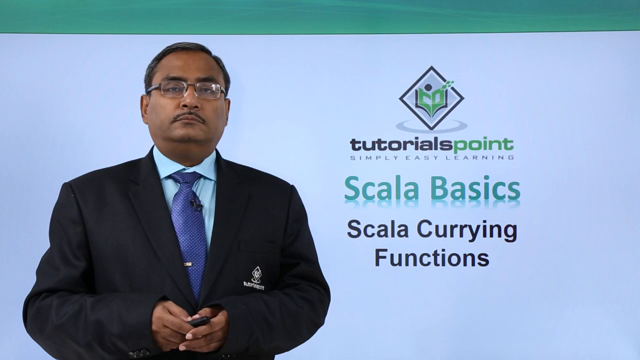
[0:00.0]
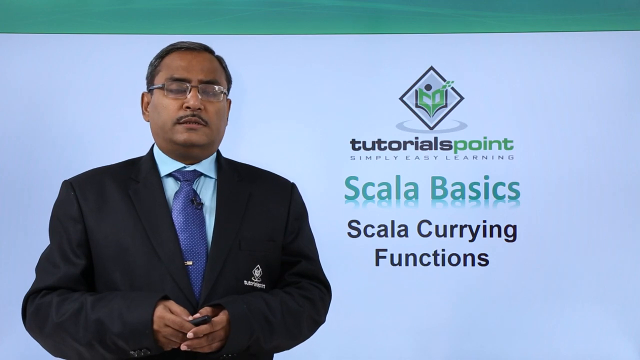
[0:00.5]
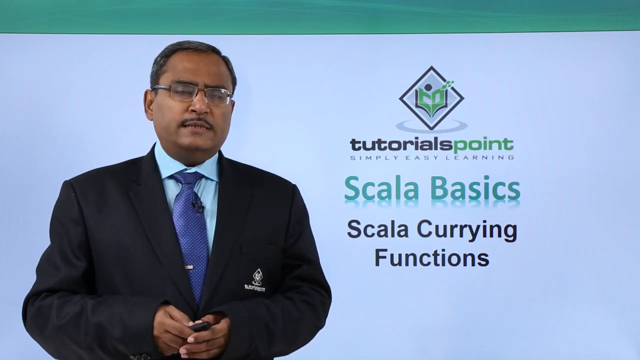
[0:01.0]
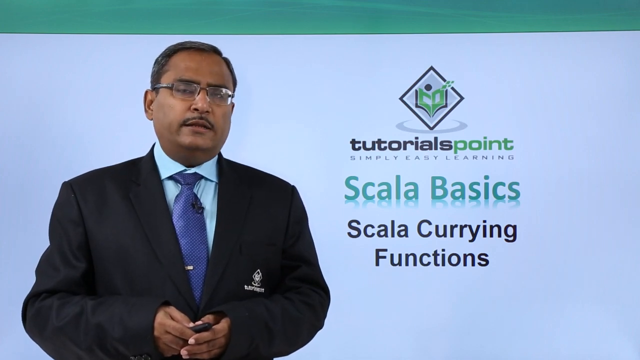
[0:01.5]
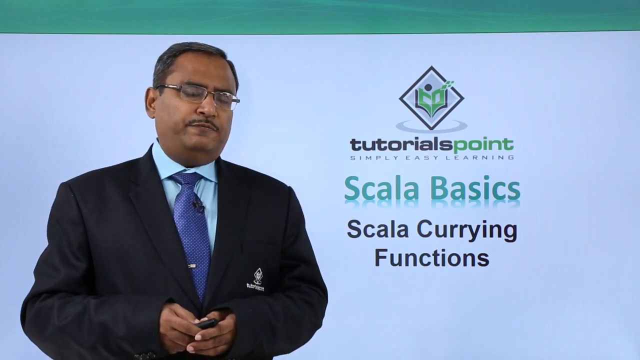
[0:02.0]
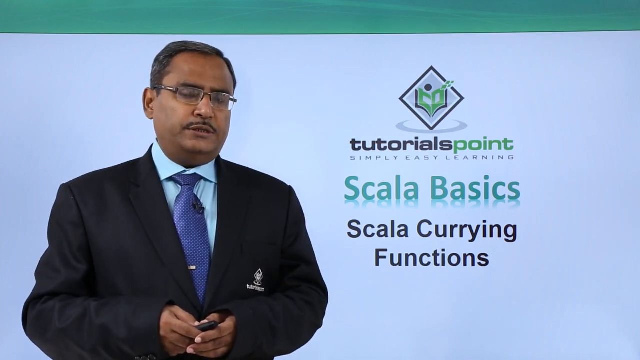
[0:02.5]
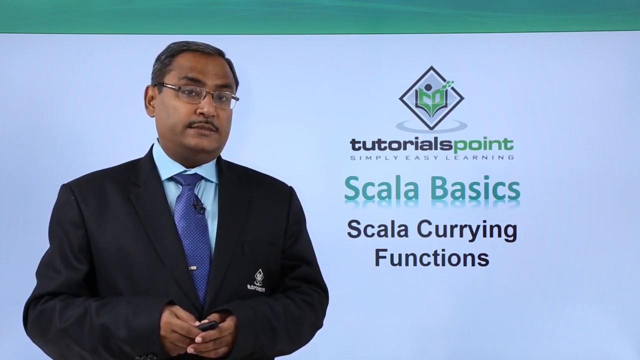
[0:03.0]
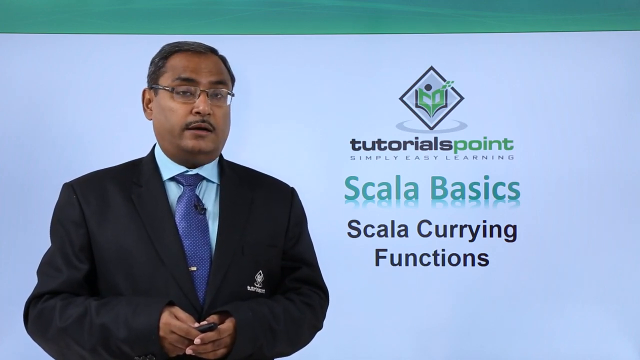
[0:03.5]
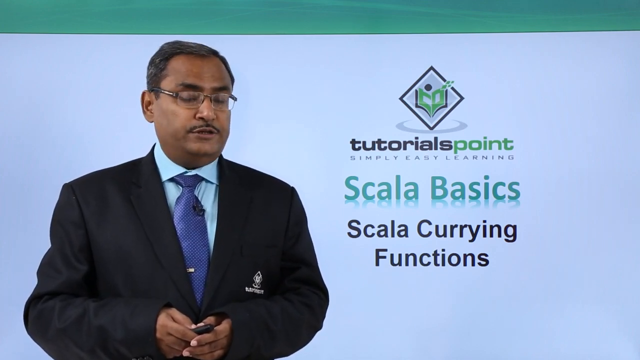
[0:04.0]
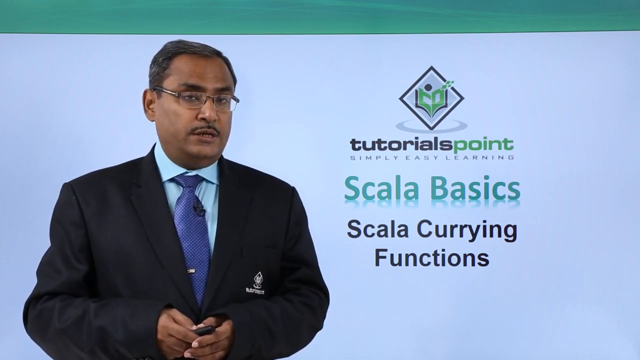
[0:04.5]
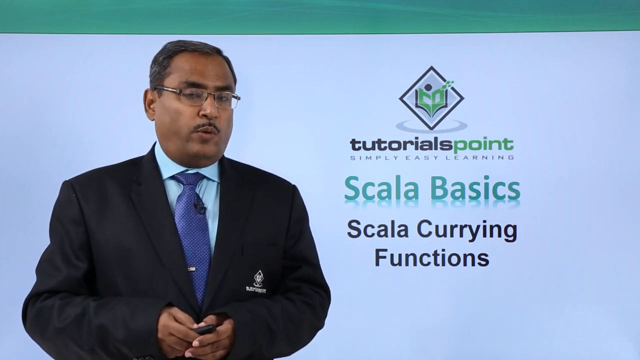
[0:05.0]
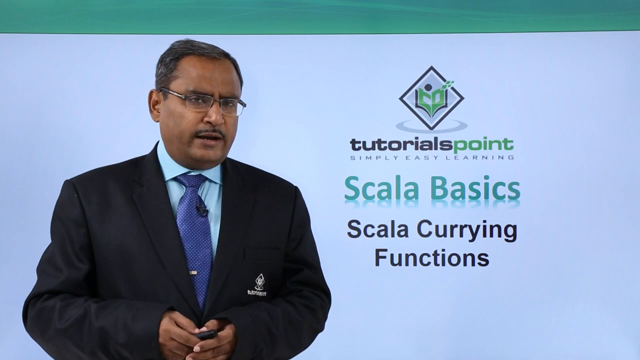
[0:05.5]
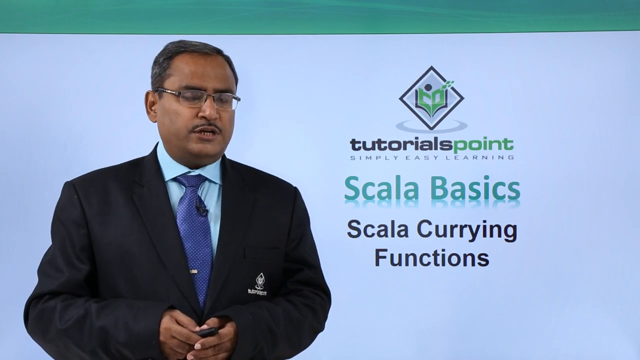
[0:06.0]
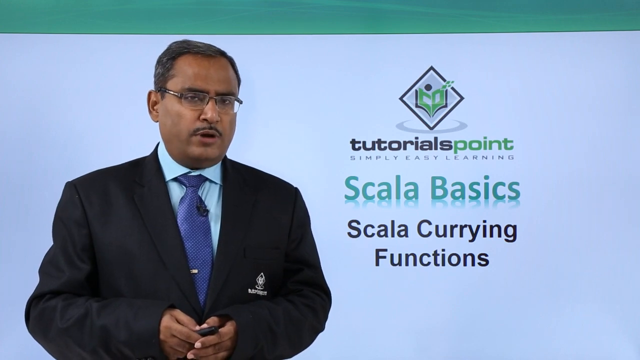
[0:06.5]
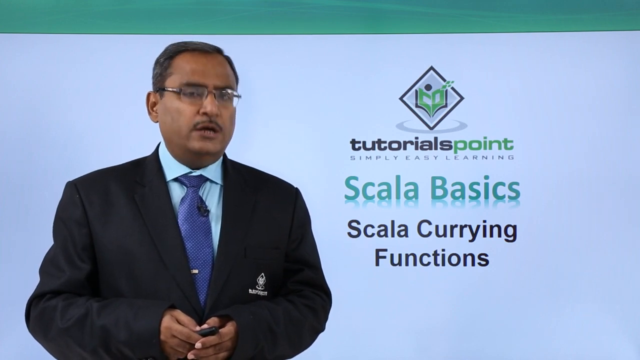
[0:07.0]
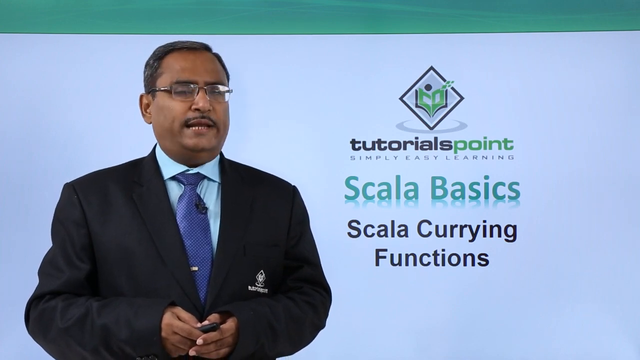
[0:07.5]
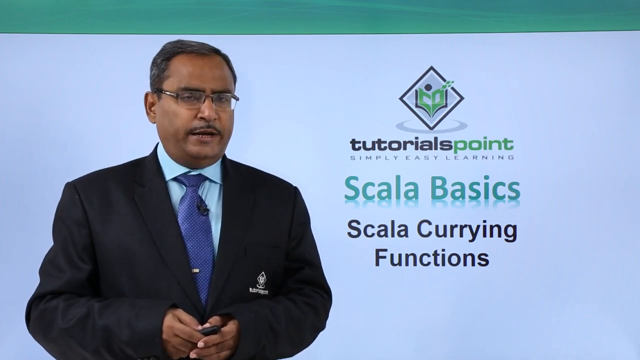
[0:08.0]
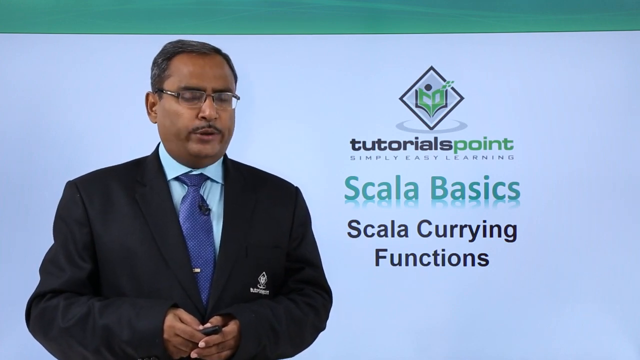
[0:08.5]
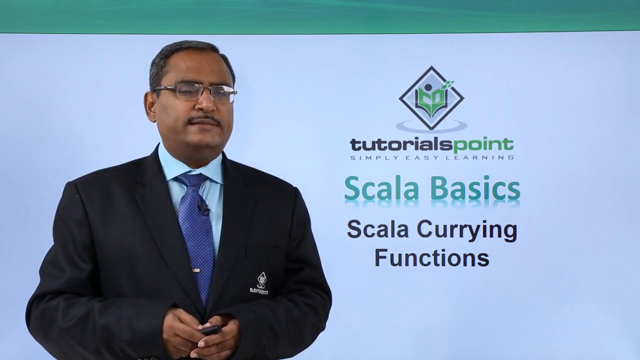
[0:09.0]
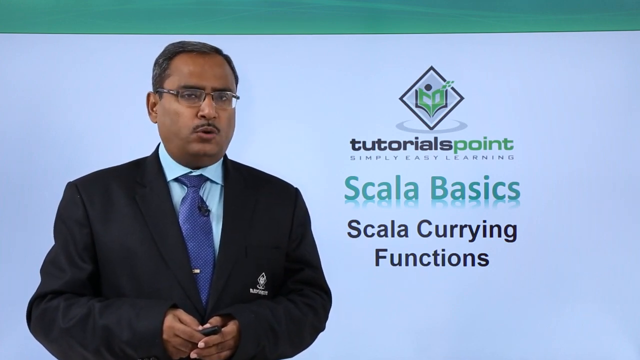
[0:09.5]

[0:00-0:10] A man in a suit stands on the left side of a white background. He has short hair and dark skin, wears wire-rimmed glasses, and has a small mustache. He wears a light blue shirt and a dark blue tie. He talks and nods as he speaks, with his hands placed on his chest. On the white background board behind him, to the right of the man, the words "tutorialspoint Scala Basics Scala Curring Functions" are written. The camera angle does not change, and the man is visible from the chest up.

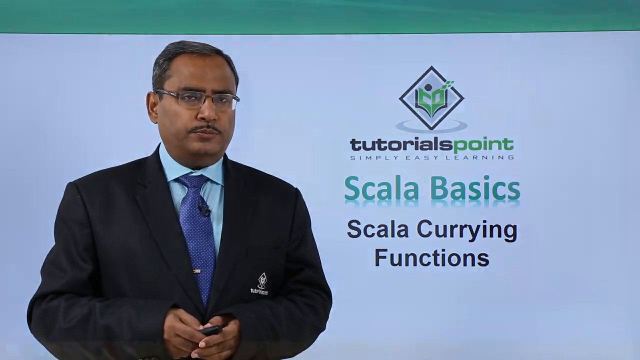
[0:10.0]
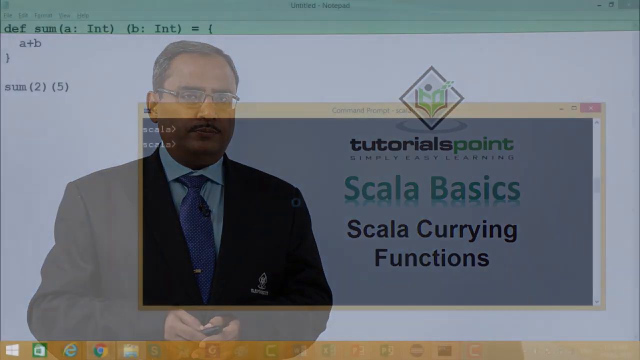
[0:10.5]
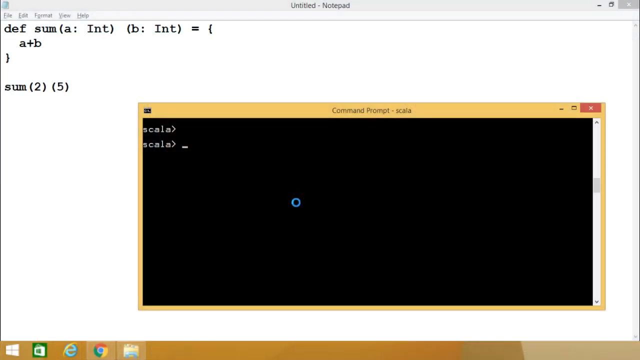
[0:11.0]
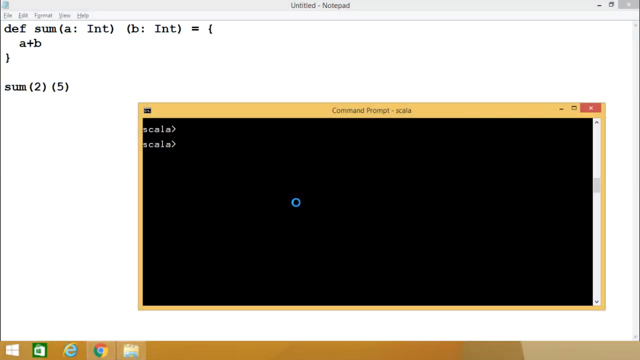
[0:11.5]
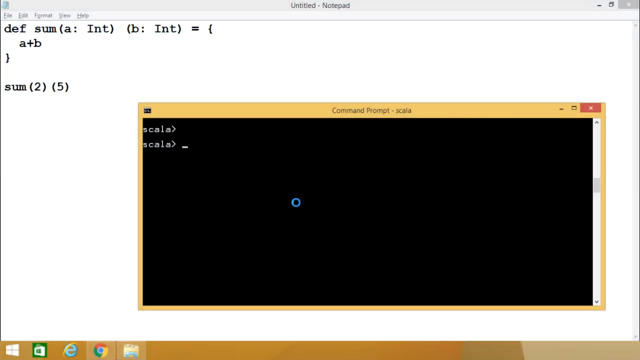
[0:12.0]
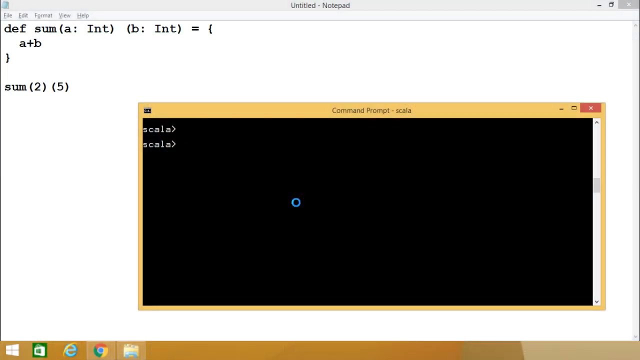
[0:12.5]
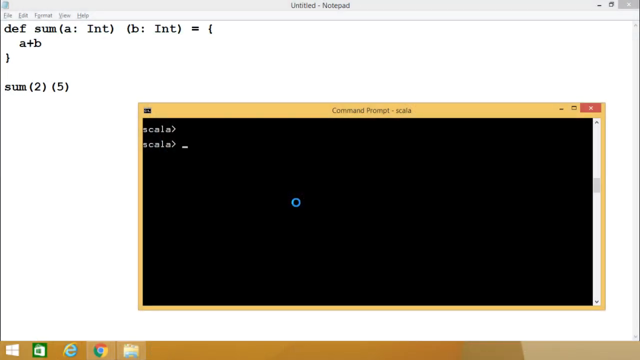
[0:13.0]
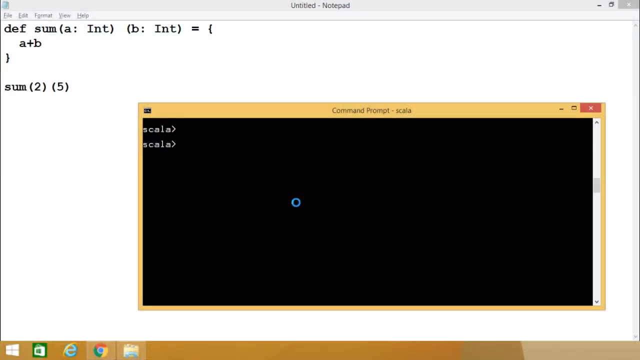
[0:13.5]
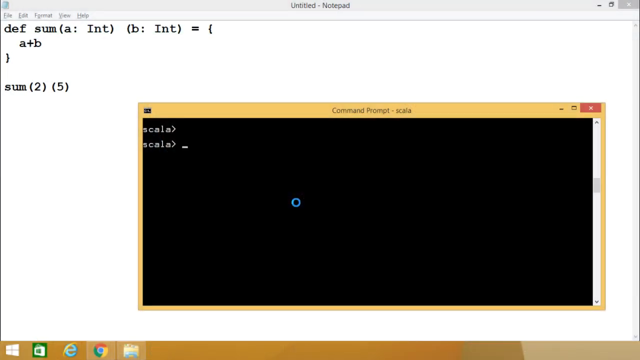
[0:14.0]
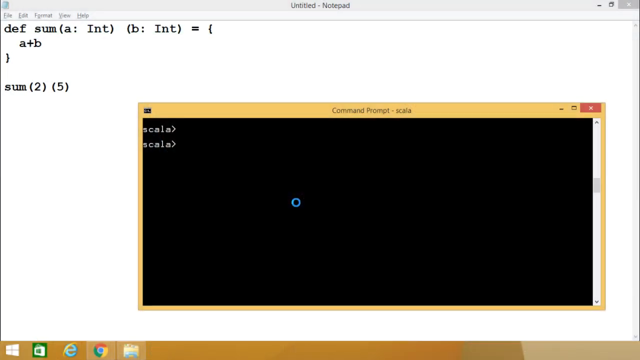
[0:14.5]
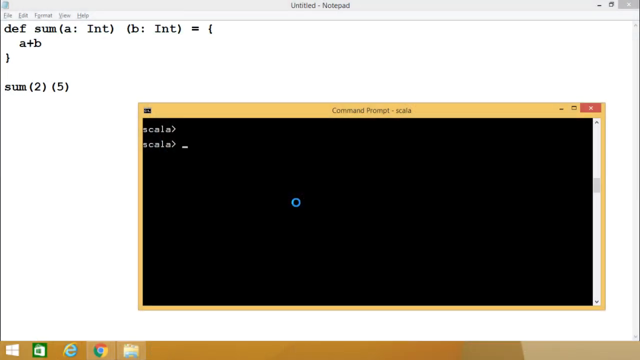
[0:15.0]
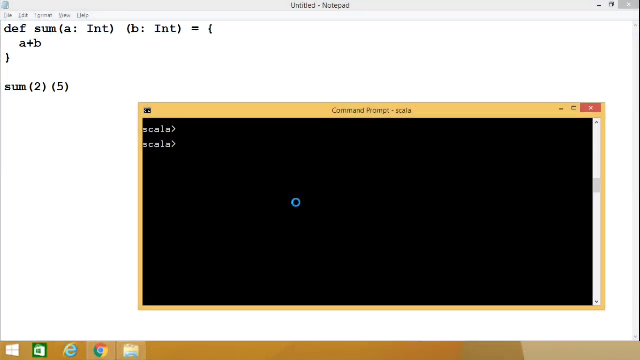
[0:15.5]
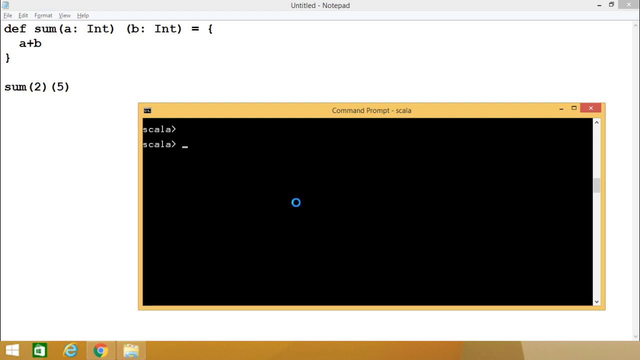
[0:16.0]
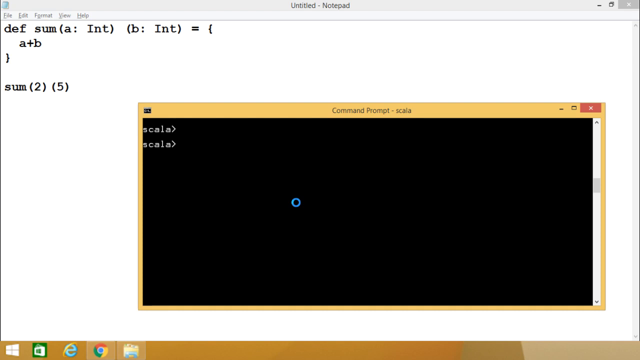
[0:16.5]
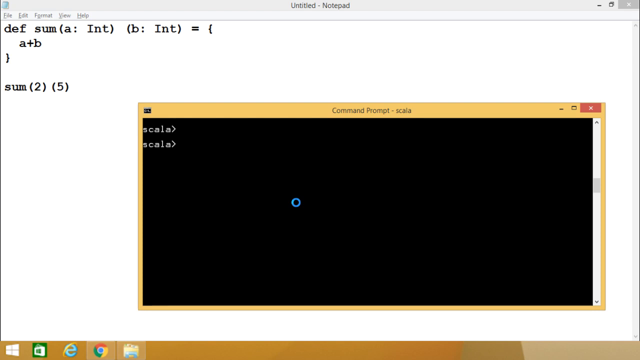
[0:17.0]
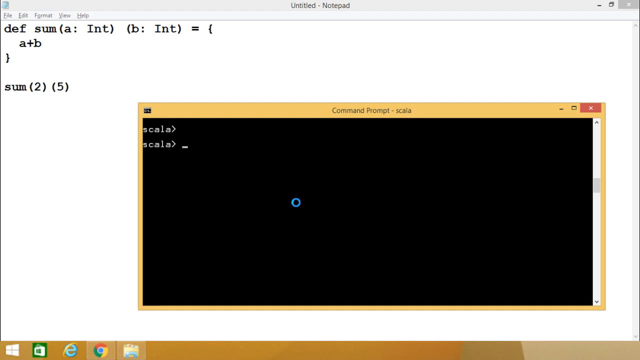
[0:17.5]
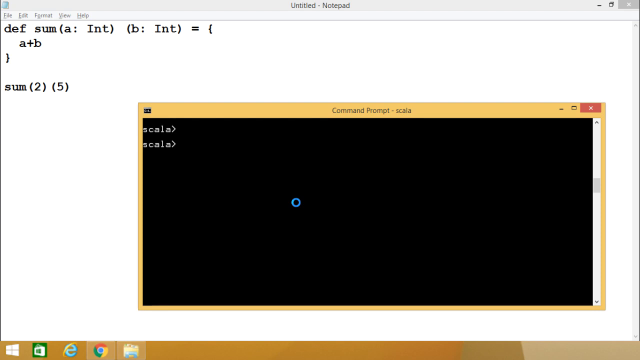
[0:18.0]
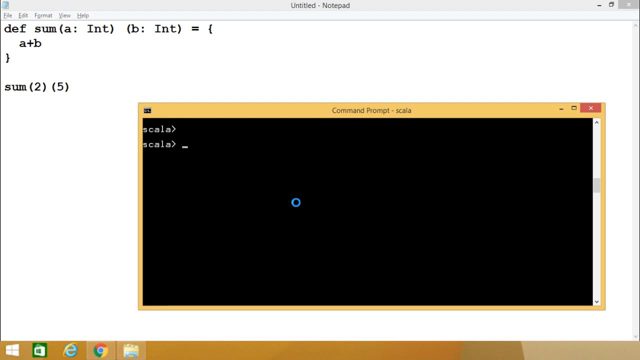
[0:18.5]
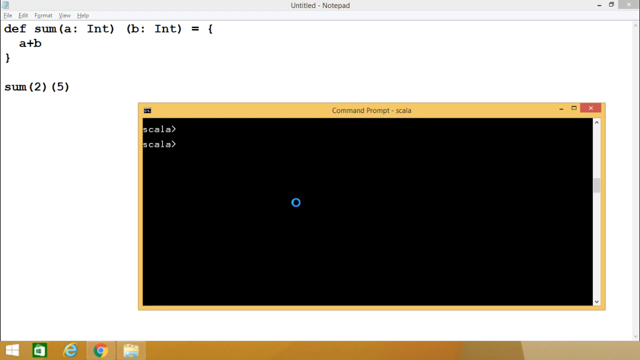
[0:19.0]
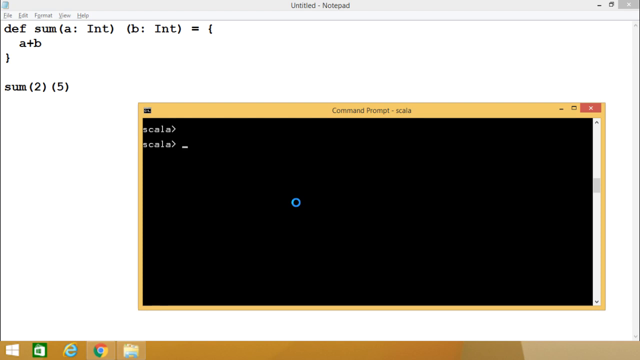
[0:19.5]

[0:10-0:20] The image of the man in front of the white background fades away and is replaced by a Notepad page titled "Untitled Notepad". Below the title are toolbars labeled "File, Edit, Format, View, and Help", and below the toolbars are some pre-entered characters. To the right of these characters is a page resembling a blackboard, with a yellow border and the title "Comment Prompt - Scala". Its background is black, with "Scala" written on it twice. The mouse shows a loading state, and the video remains on this page.